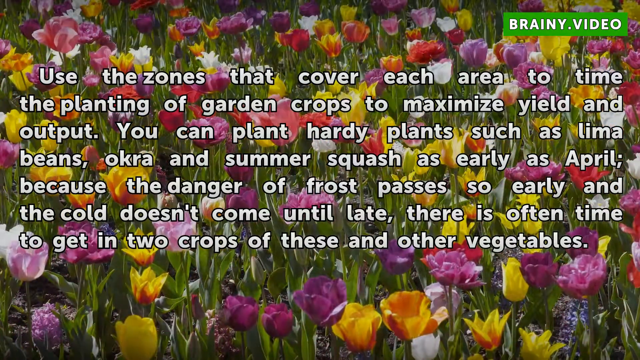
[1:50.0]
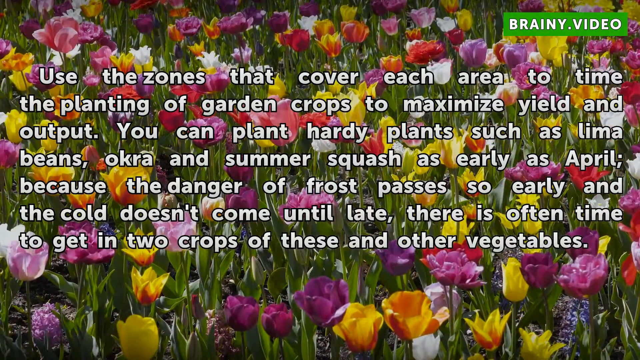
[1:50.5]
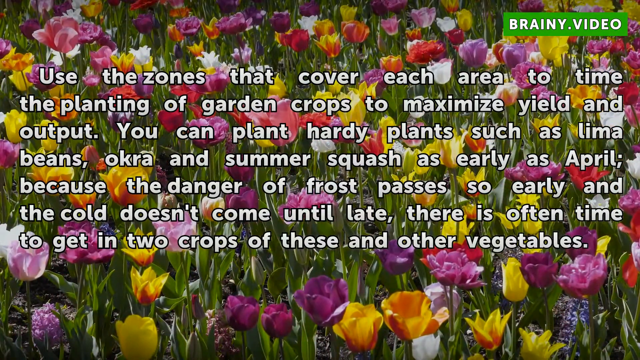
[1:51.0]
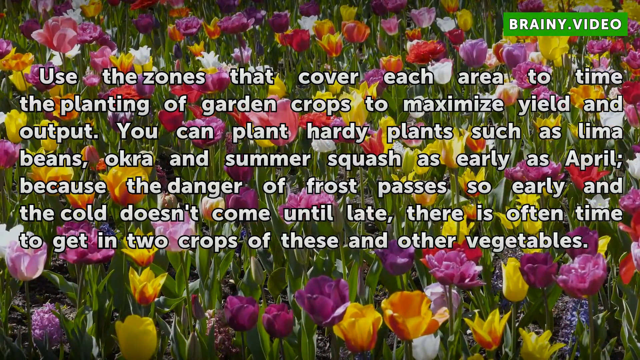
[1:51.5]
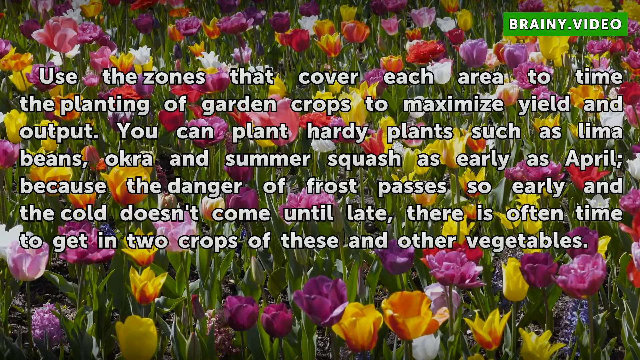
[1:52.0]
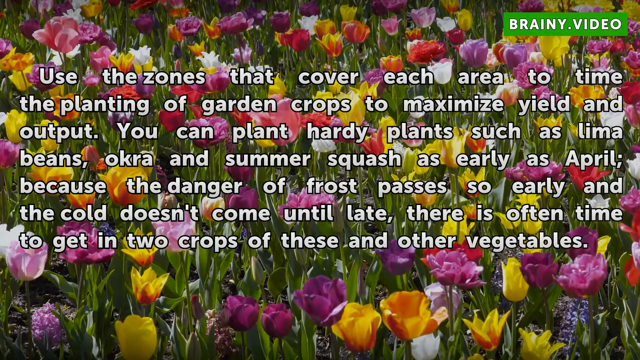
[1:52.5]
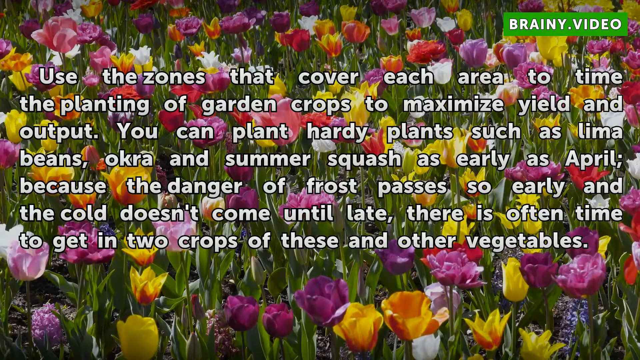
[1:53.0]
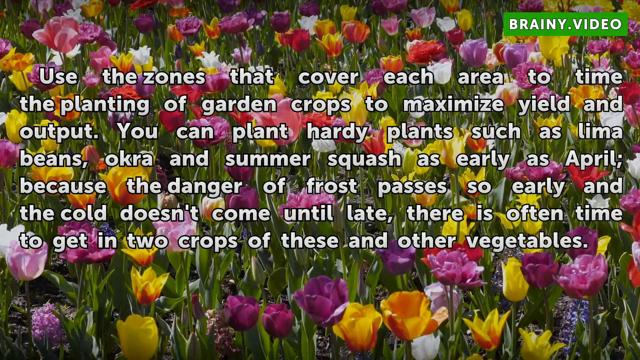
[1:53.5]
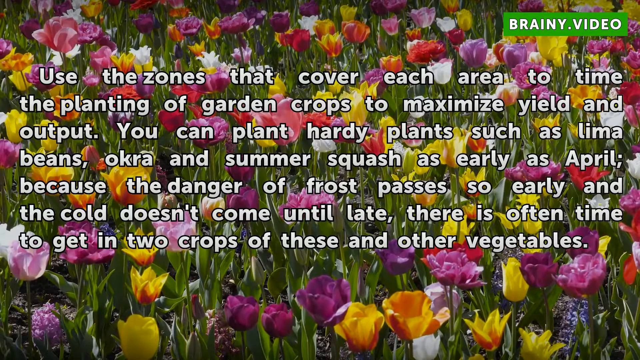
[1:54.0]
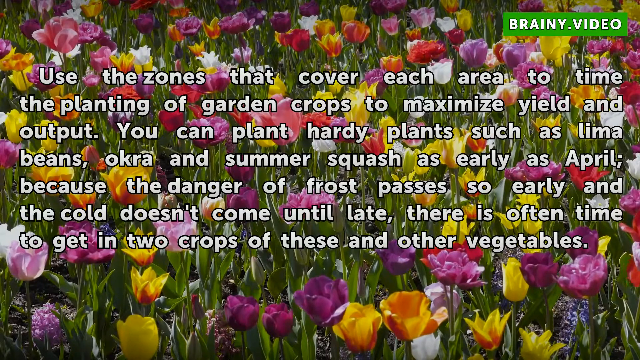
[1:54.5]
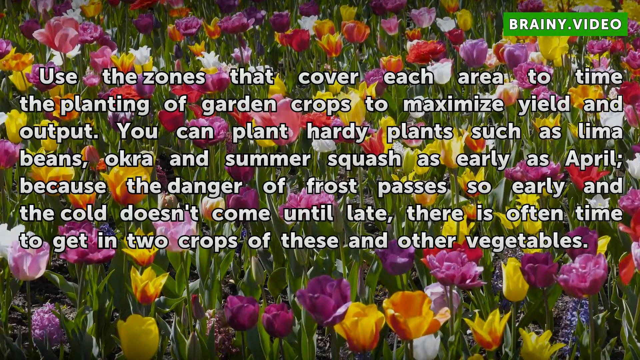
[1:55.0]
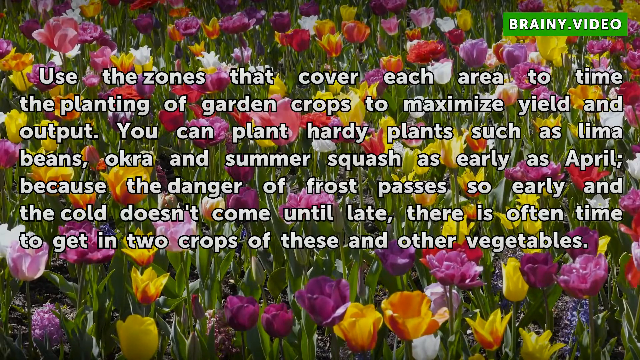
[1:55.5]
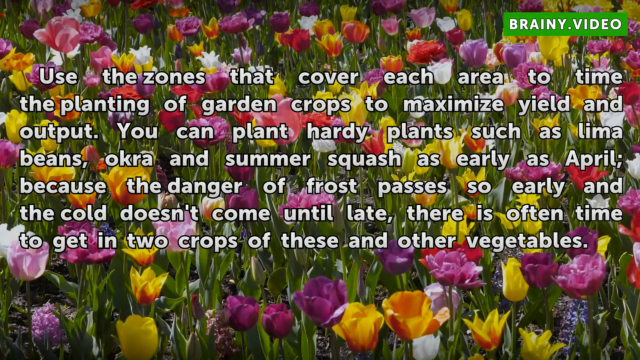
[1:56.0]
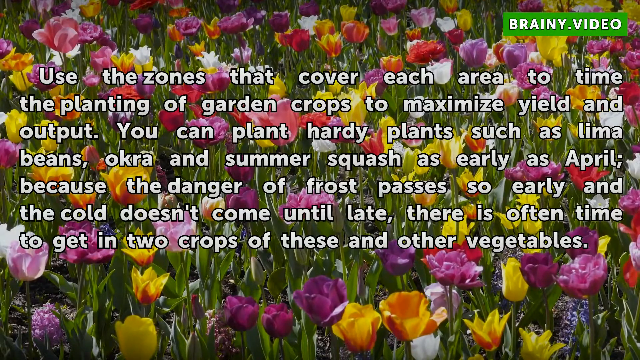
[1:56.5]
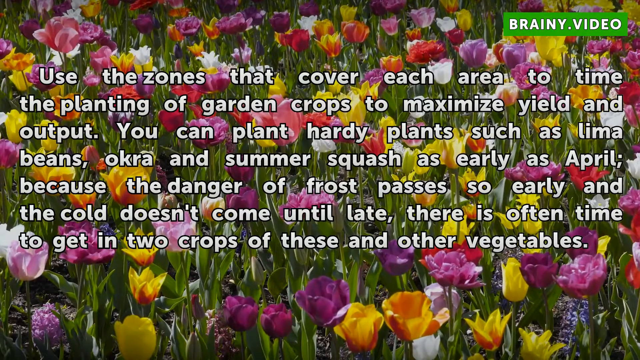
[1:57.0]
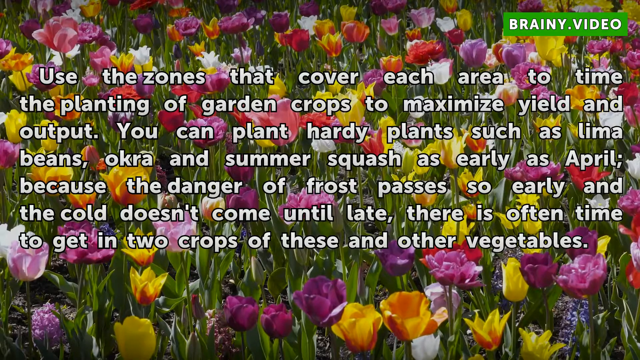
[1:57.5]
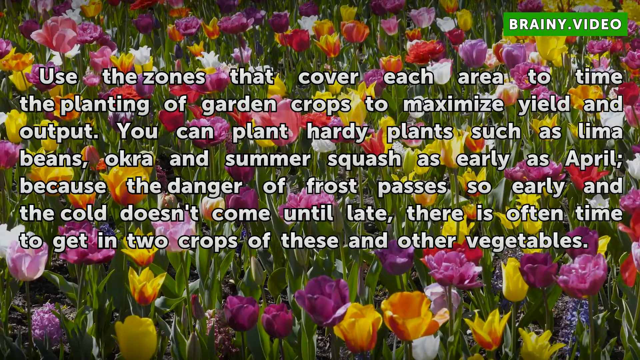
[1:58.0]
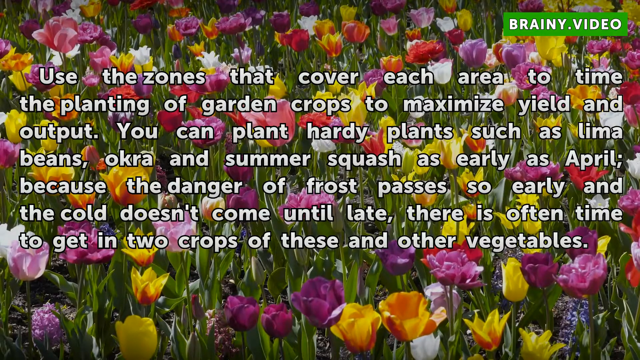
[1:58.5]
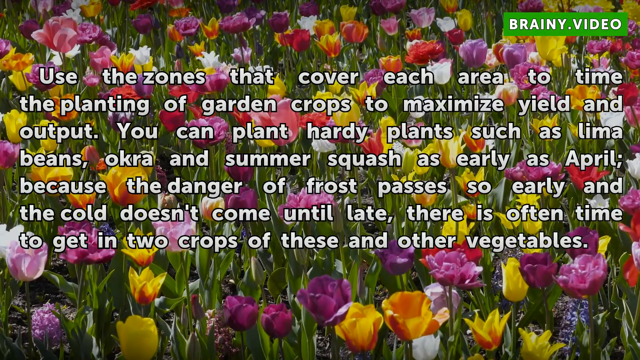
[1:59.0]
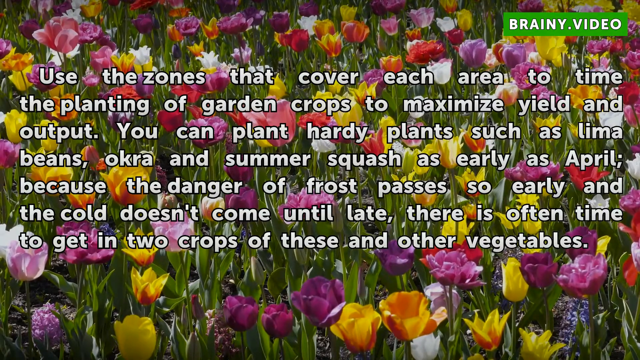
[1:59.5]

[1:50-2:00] The same text stays stationary on the screen, but behind it is a close-up shot of a field of poppies again. The poppies fill the screen in pink, purple, yellow, orange and red, stirring gently in the breeze. The white text over the footage continues to read "use the zones that cover each area to time the planting of garden crops to maximise yield and output. You can plant hardy plants such as lima beans, okra and summer squash as early as April. Because the danger of frost passes so early and the cold doesn't come until late, there is often time to get in two crops of these and other vegetables."